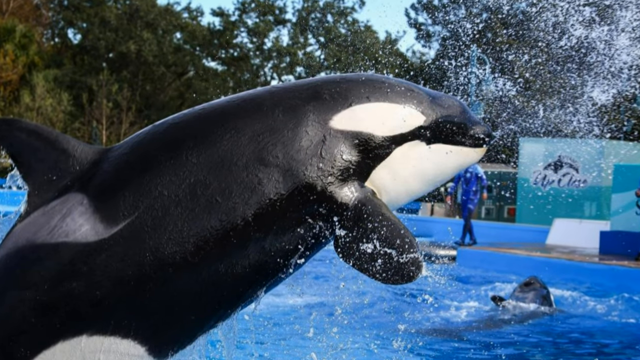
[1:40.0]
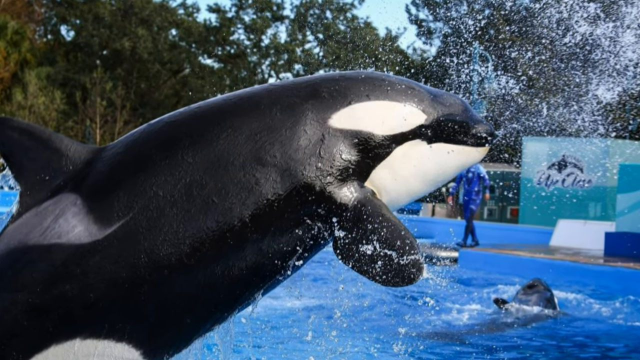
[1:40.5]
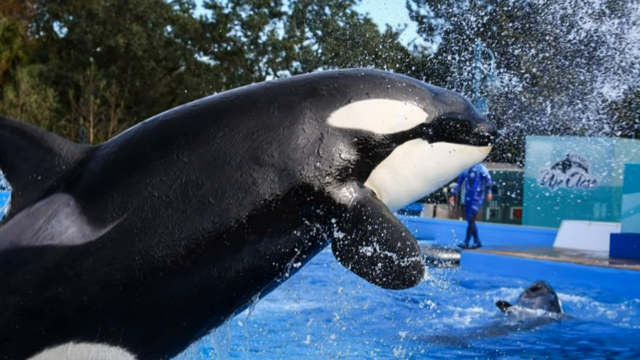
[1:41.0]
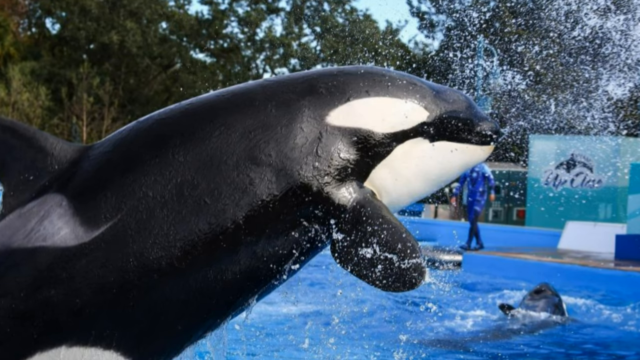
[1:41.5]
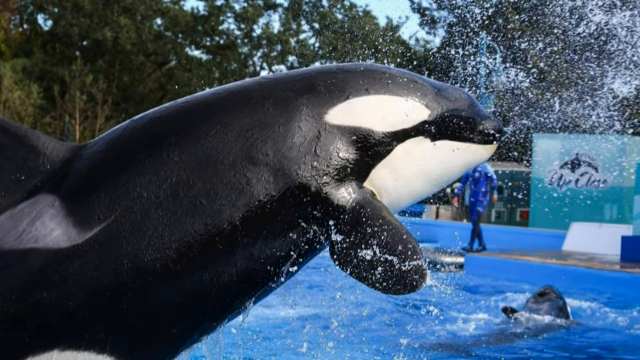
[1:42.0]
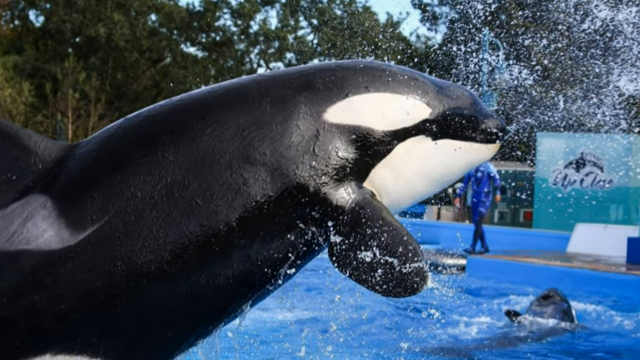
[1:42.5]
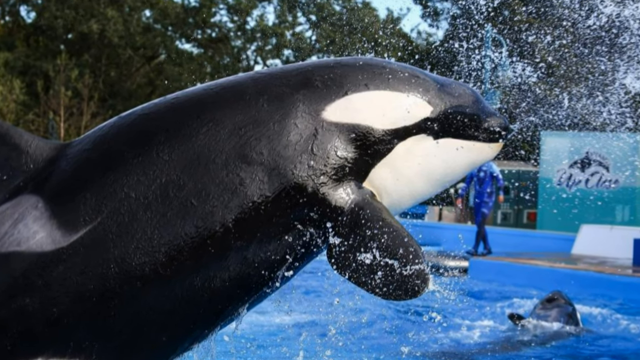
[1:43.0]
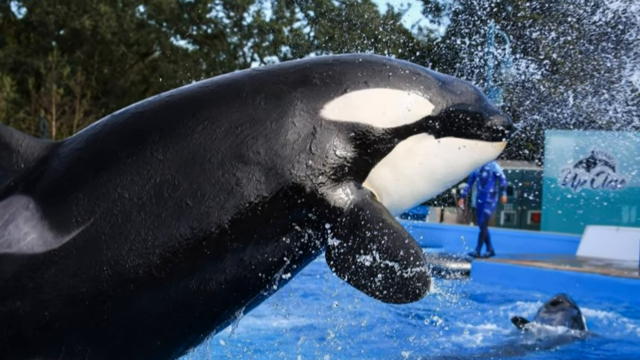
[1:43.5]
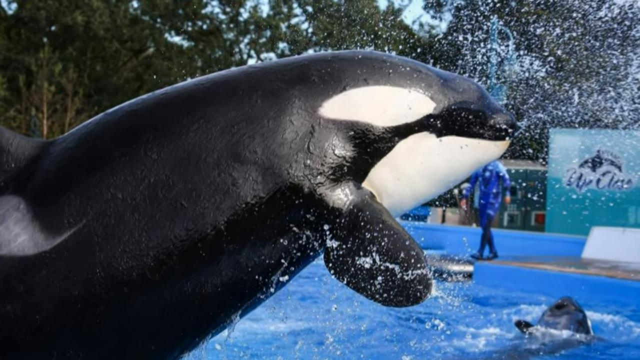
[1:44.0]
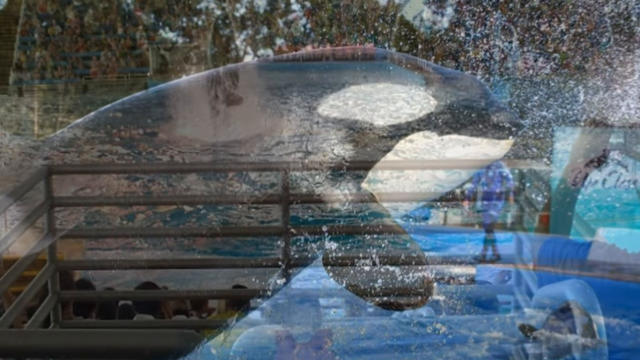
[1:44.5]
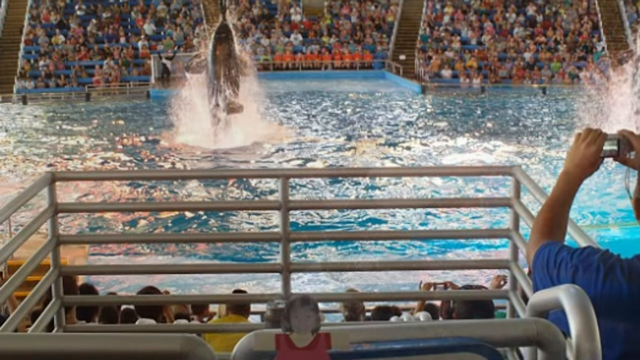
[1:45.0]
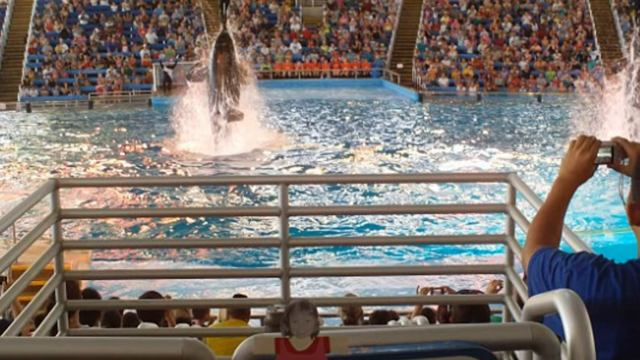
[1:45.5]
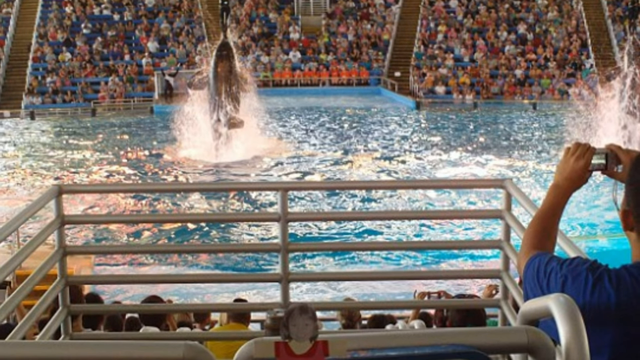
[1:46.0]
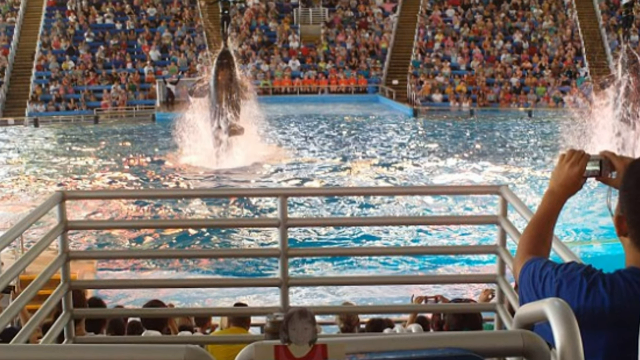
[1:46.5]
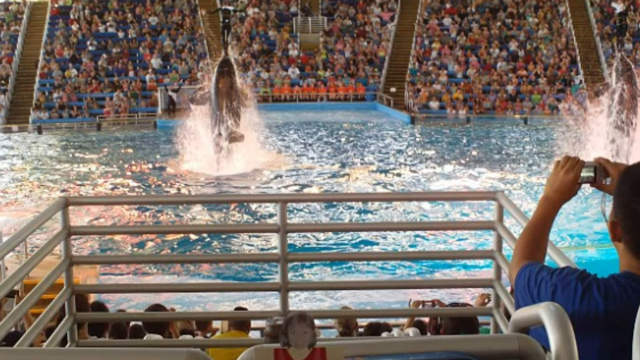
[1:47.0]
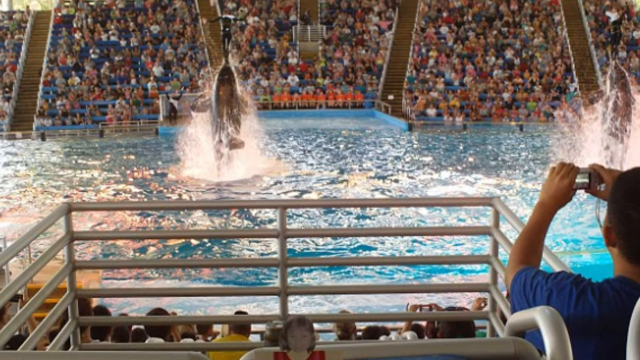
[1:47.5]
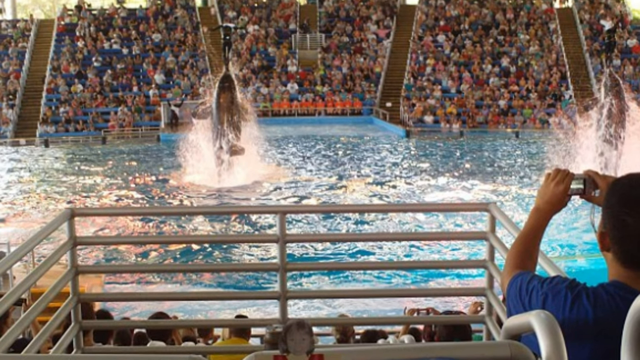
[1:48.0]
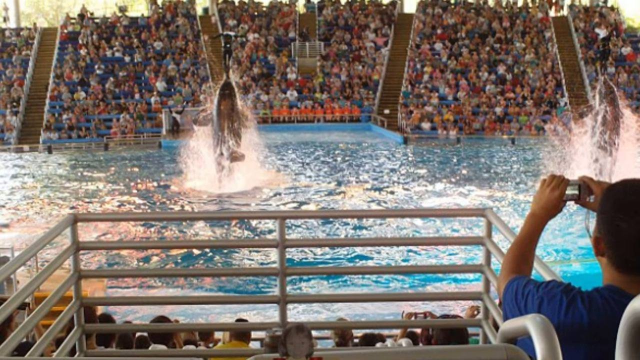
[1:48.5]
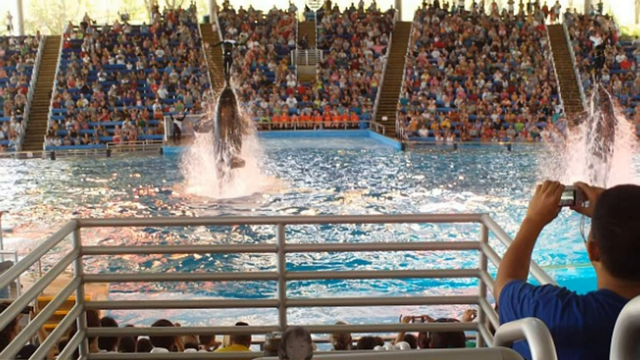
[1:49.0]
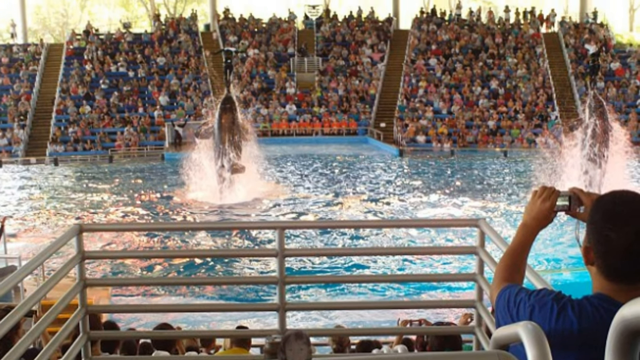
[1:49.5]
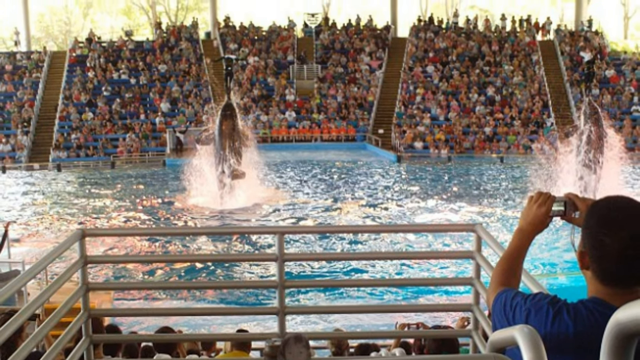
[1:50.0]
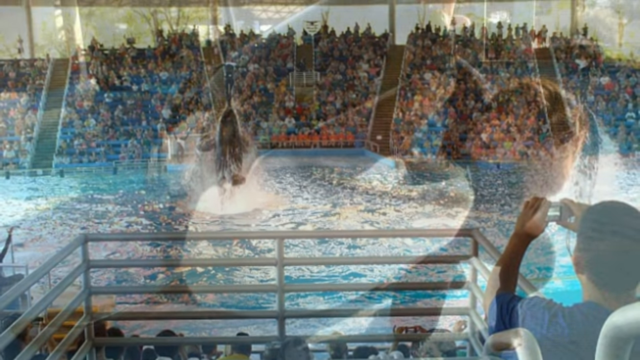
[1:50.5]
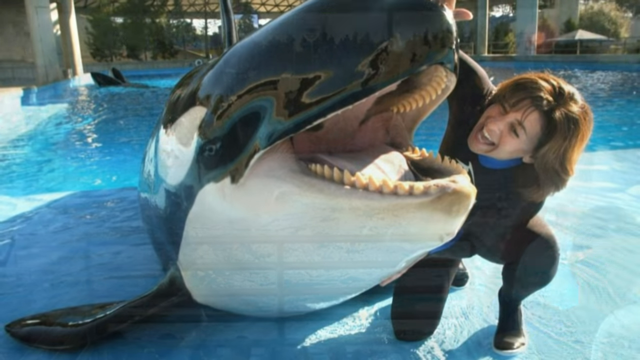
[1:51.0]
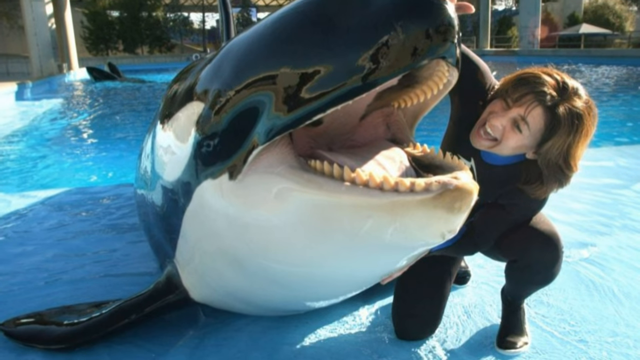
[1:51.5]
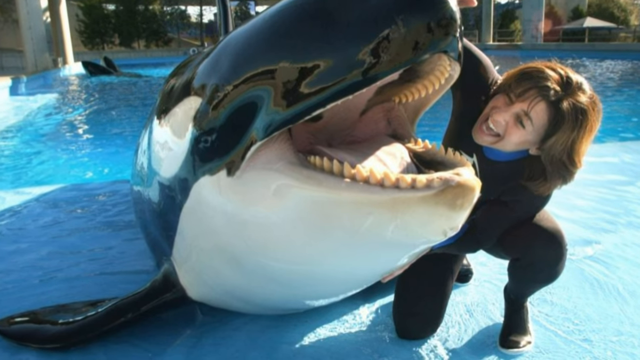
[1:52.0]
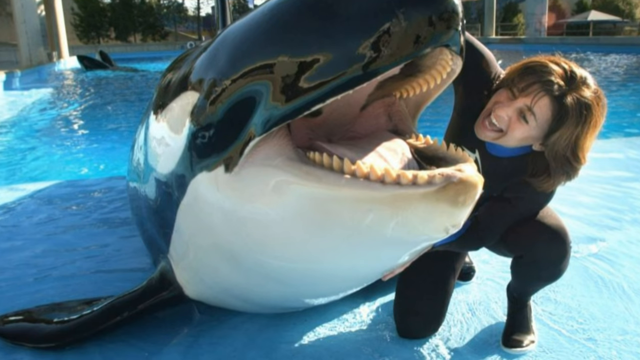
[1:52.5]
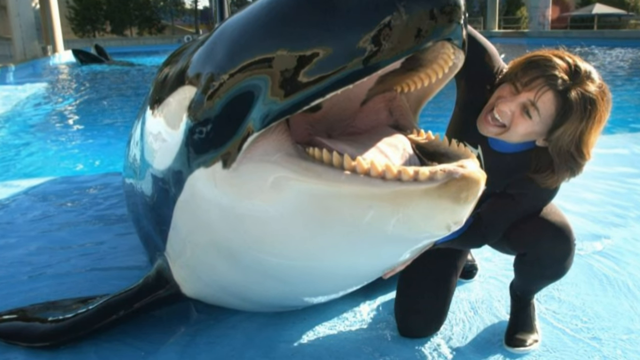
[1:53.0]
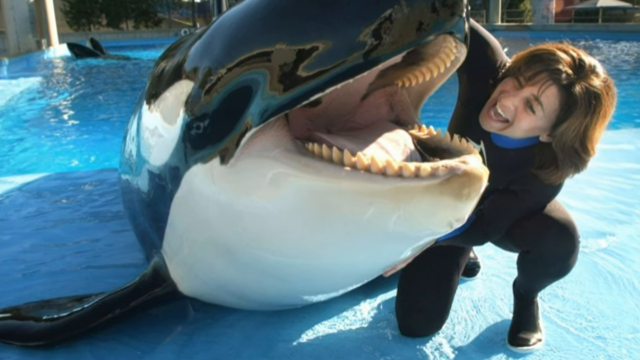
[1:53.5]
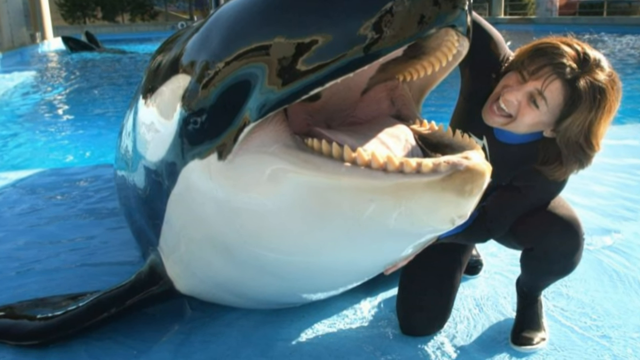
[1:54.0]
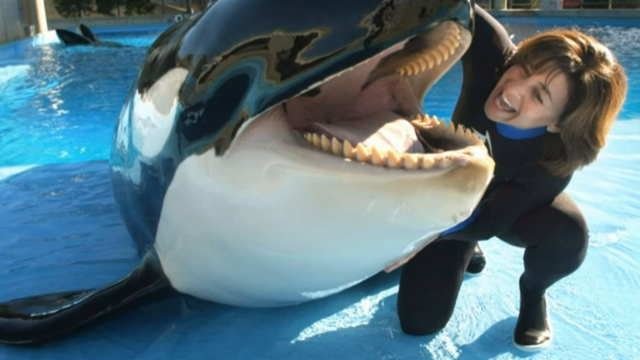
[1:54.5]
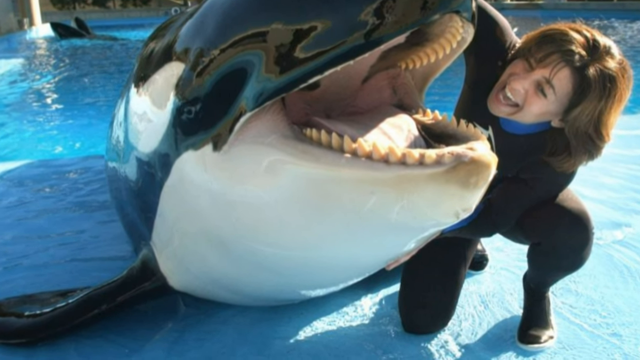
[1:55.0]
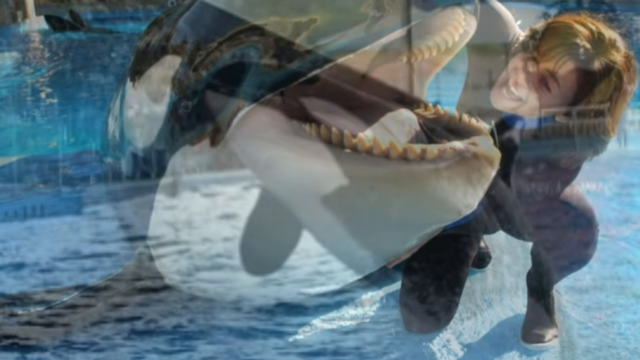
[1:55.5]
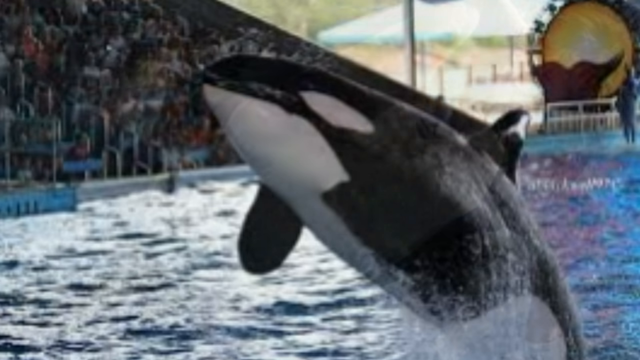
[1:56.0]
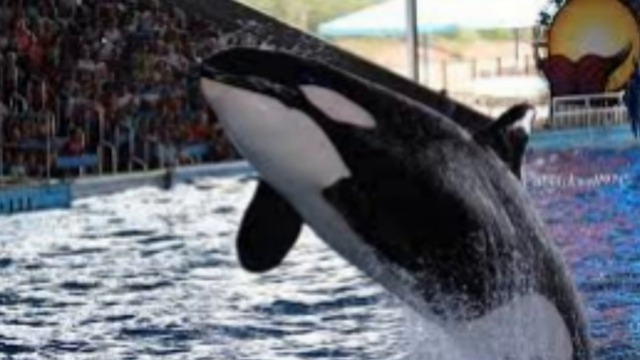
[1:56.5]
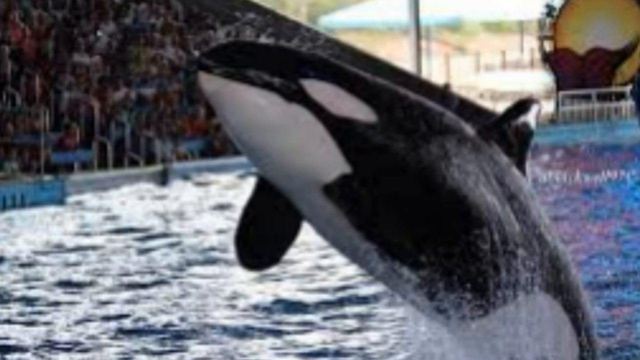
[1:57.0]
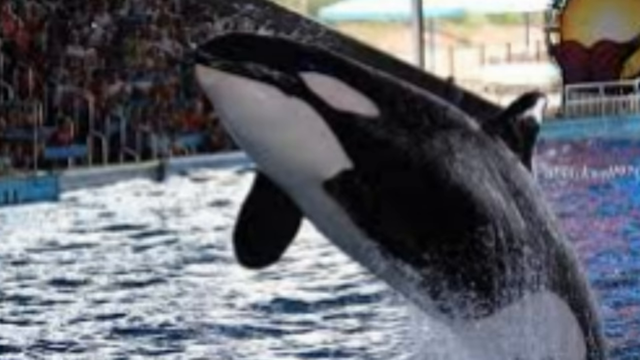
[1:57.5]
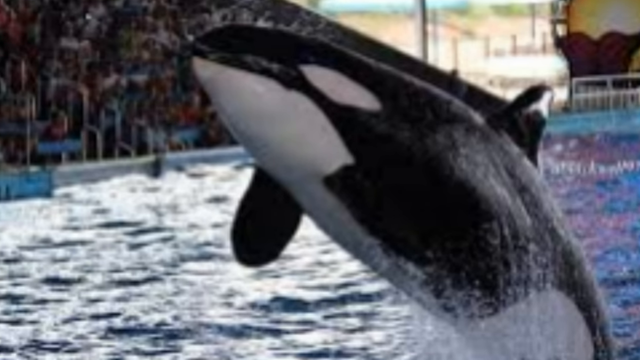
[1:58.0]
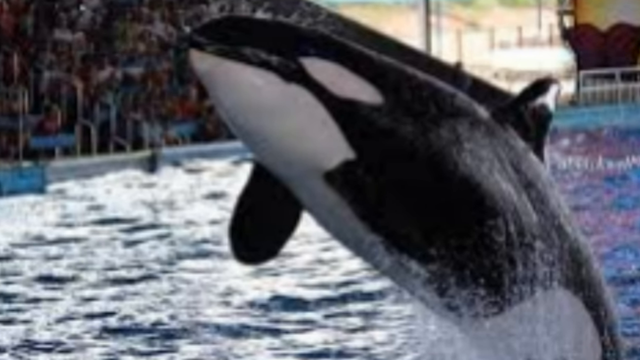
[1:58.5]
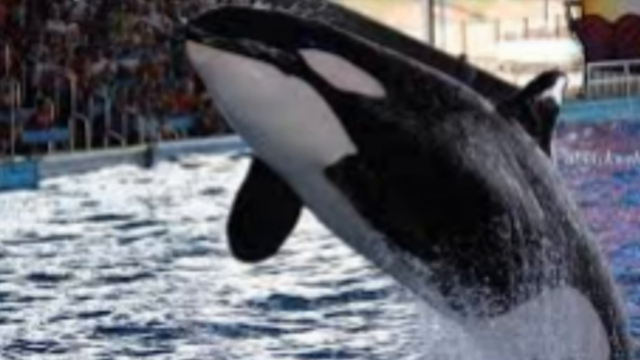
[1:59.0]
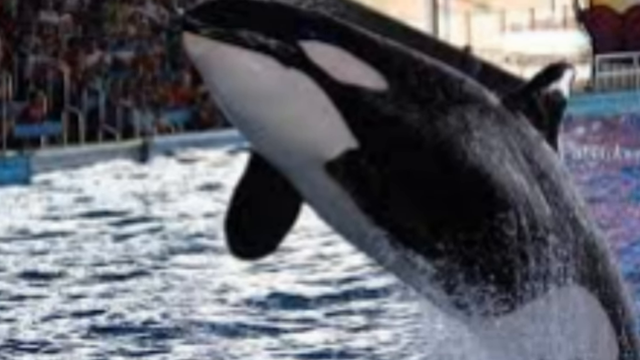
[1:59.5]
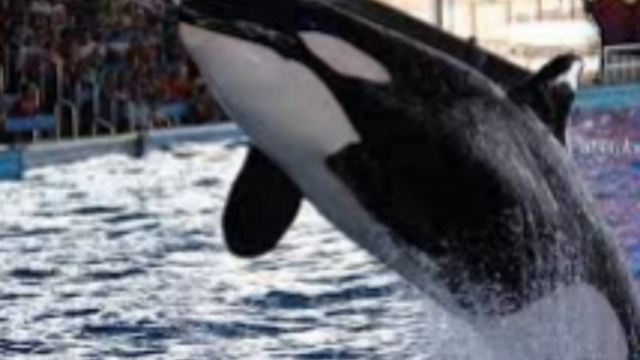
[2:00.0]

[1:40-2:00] A black and white orca is in the sky with water splashing around it. The view zooms out to show a man holding a camera, seated in a fenced area, watching a giant orca perform a trick, with the giant orca and many seated spectators in the background. Next, a giant orca has its mouth open, exposing its teeth and tongue, as a smiling woman with brown hair in black swimming trunks holds the top and bottom of the orca, in crystal-clear water. In the images of orcas diving out of the water, water is shown underneath the orca.